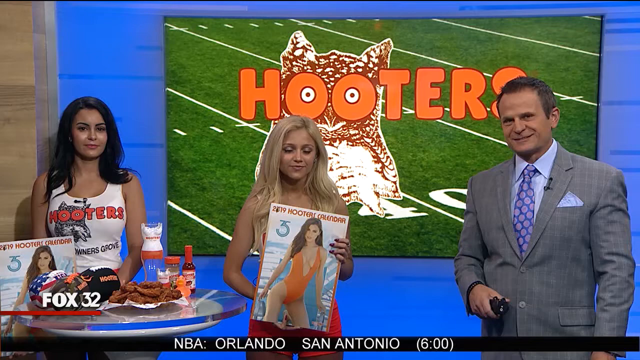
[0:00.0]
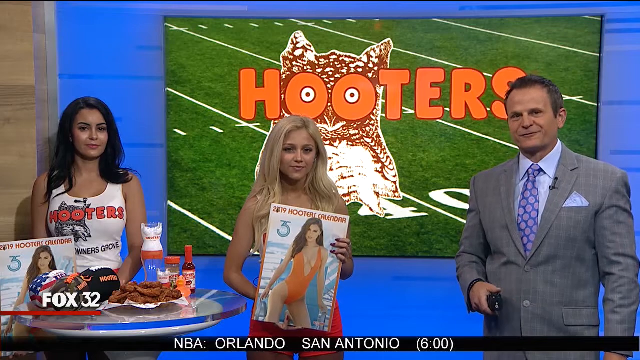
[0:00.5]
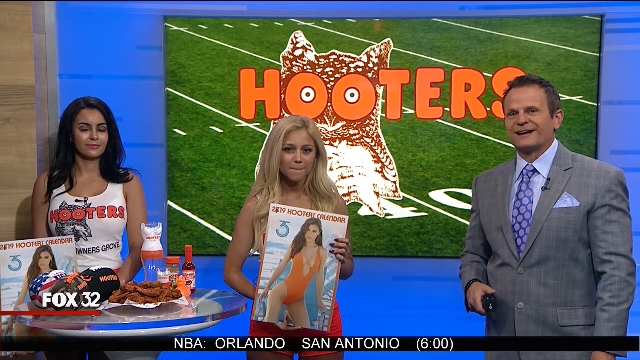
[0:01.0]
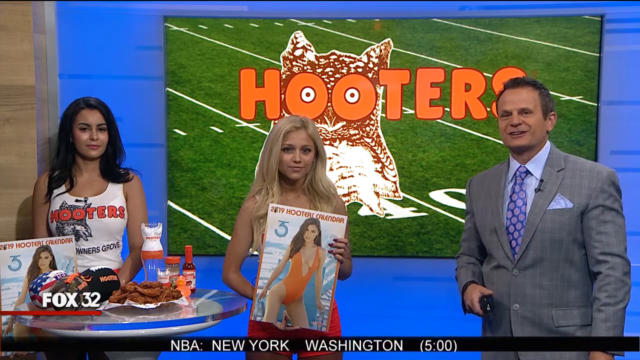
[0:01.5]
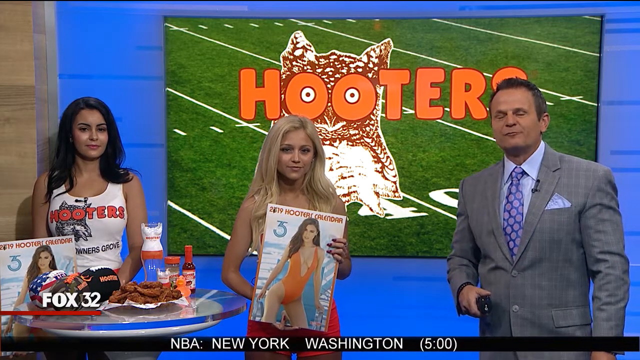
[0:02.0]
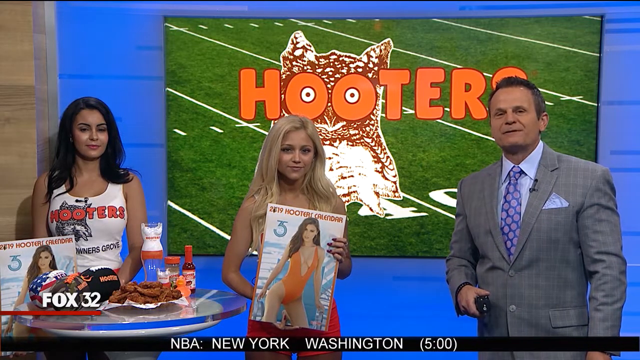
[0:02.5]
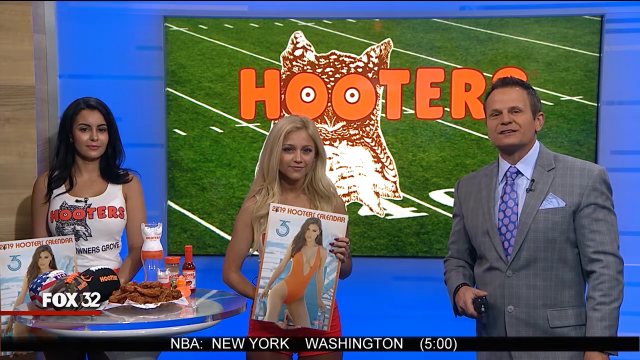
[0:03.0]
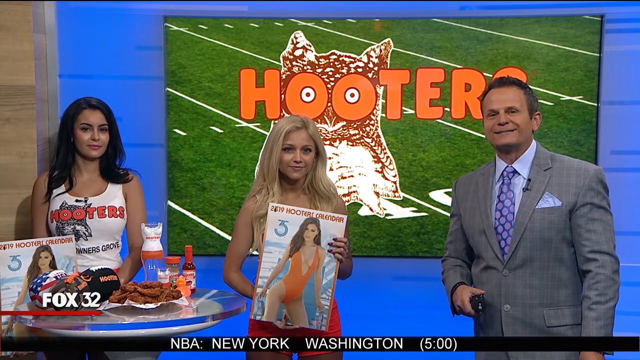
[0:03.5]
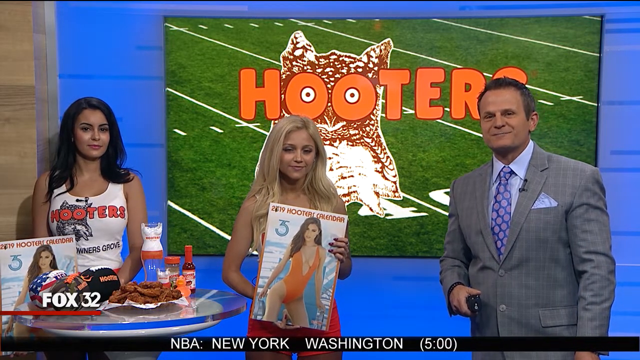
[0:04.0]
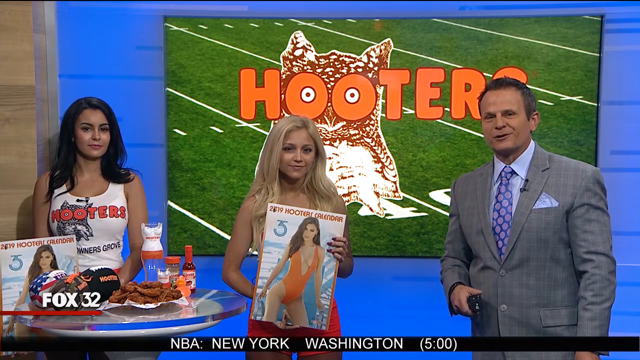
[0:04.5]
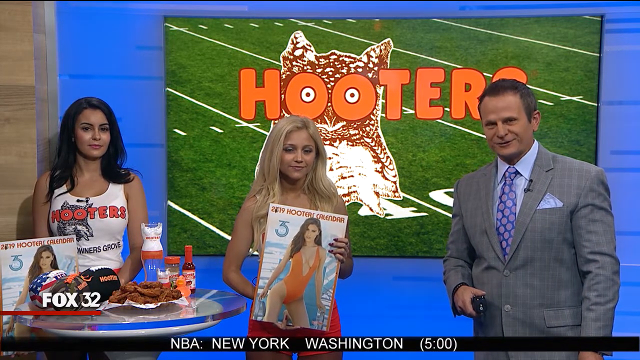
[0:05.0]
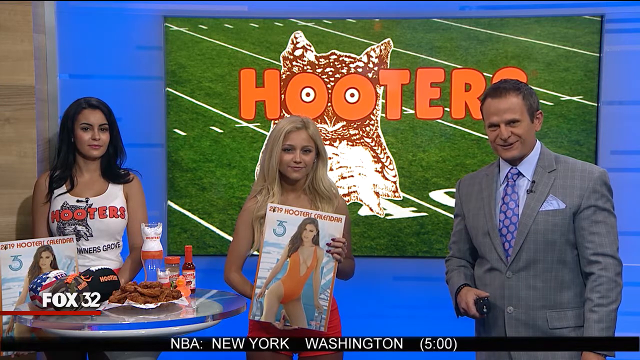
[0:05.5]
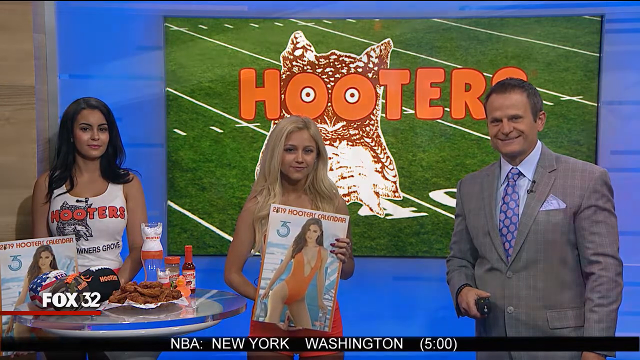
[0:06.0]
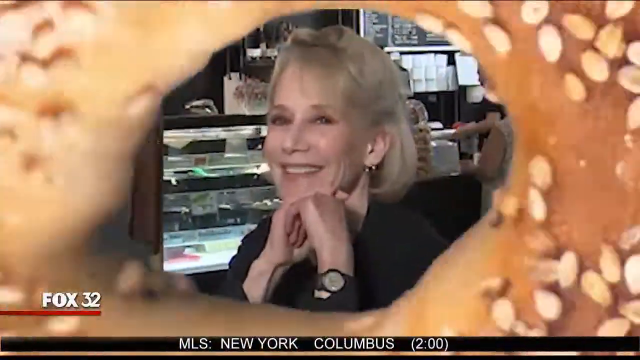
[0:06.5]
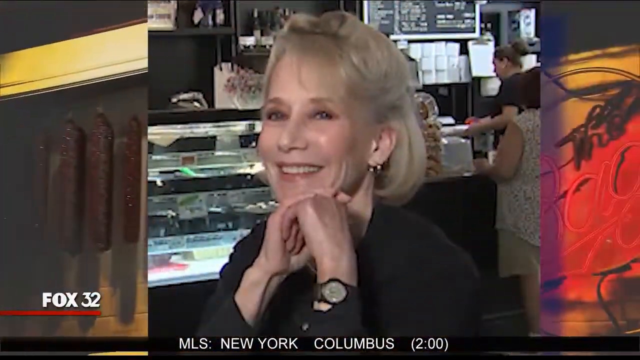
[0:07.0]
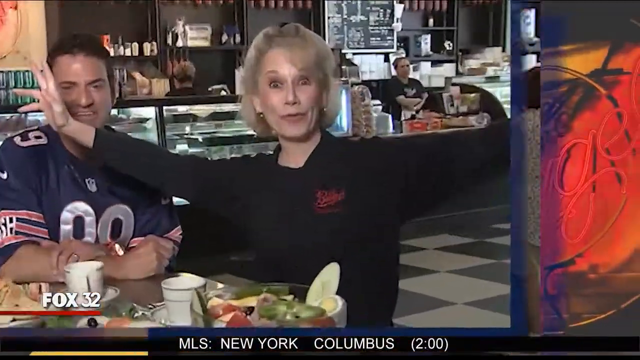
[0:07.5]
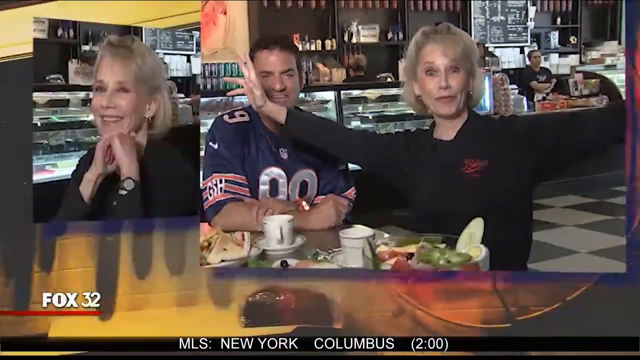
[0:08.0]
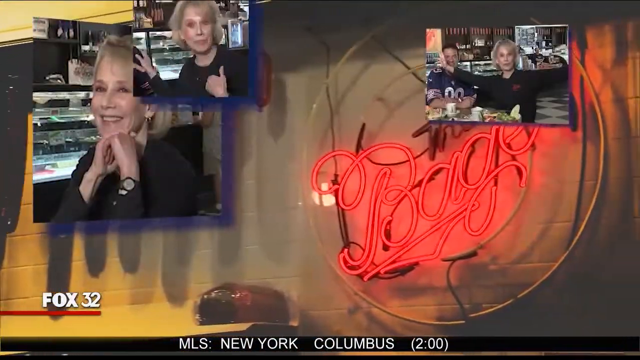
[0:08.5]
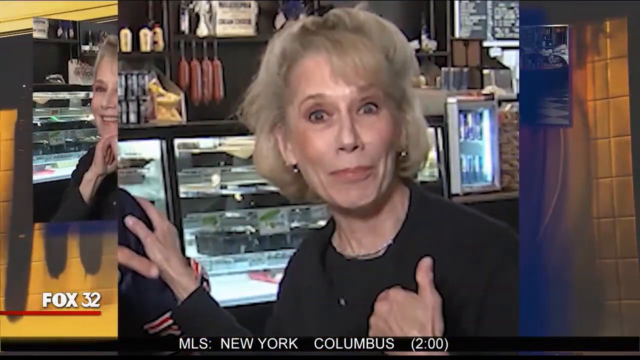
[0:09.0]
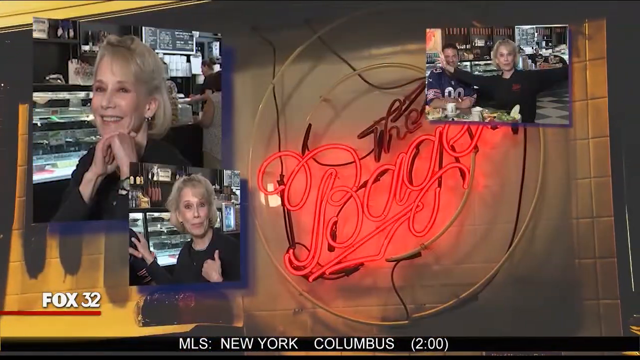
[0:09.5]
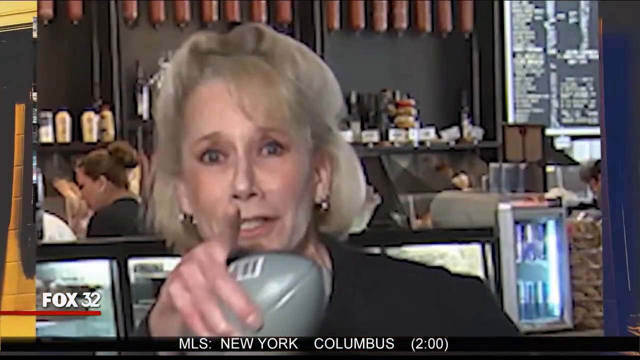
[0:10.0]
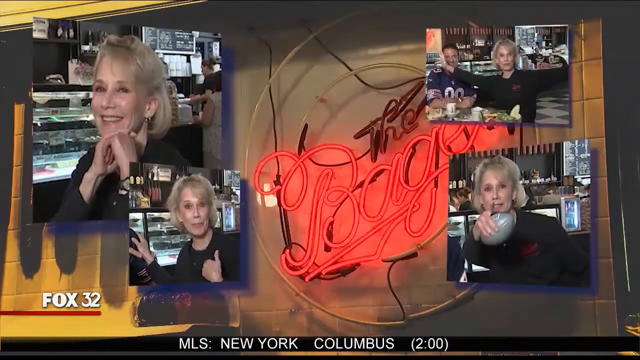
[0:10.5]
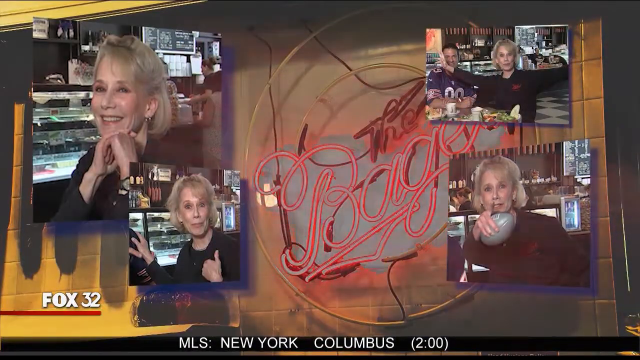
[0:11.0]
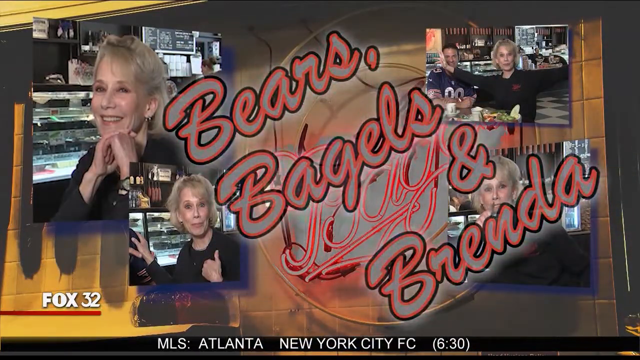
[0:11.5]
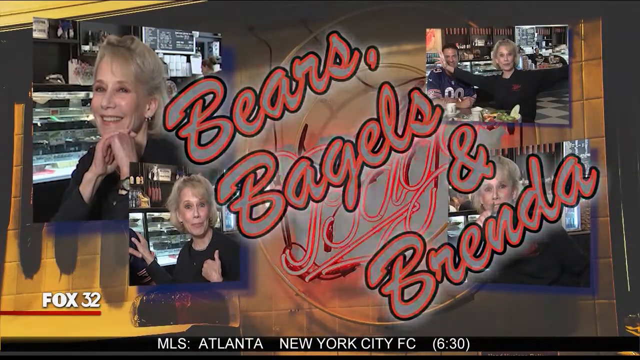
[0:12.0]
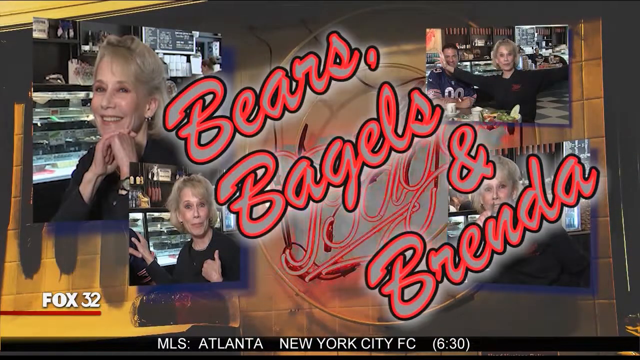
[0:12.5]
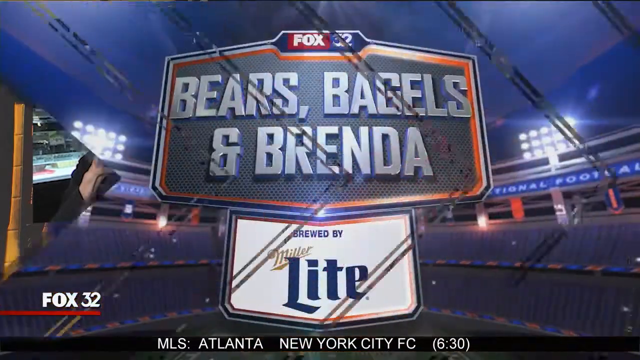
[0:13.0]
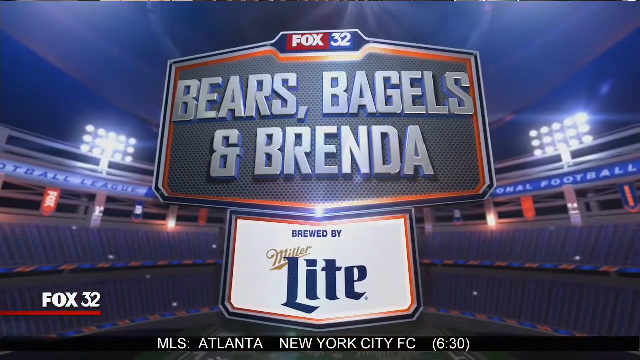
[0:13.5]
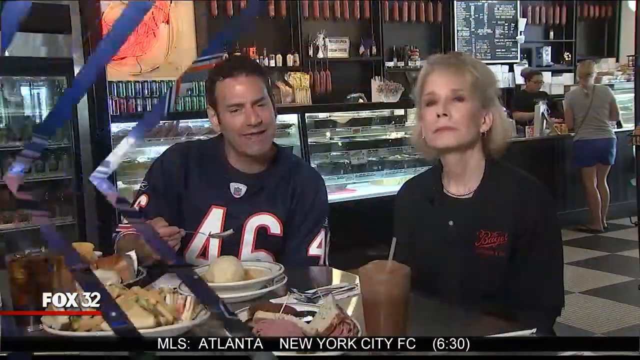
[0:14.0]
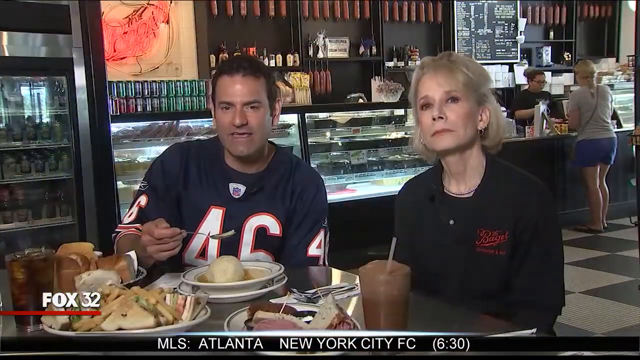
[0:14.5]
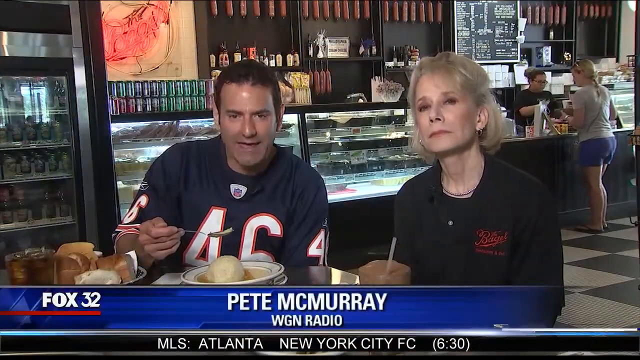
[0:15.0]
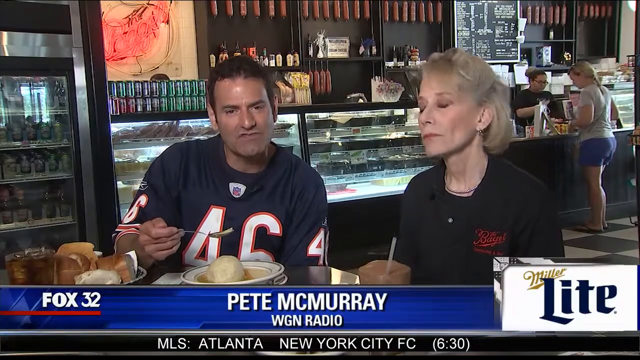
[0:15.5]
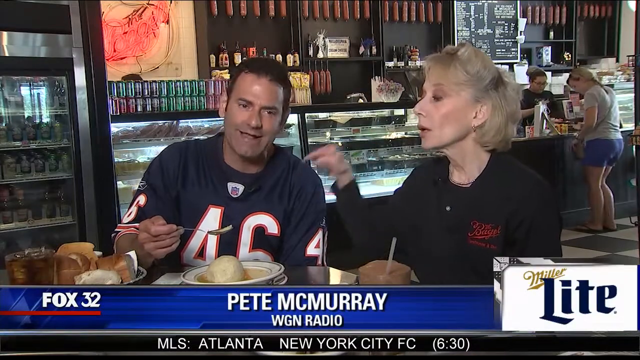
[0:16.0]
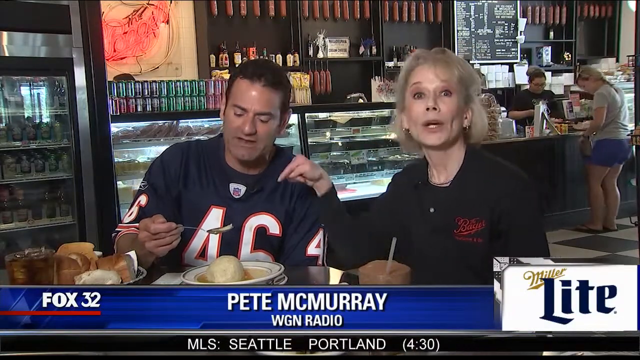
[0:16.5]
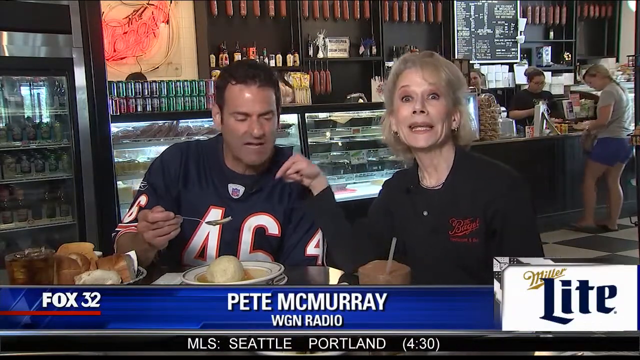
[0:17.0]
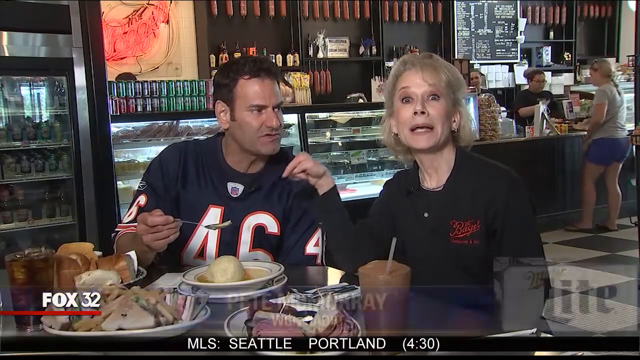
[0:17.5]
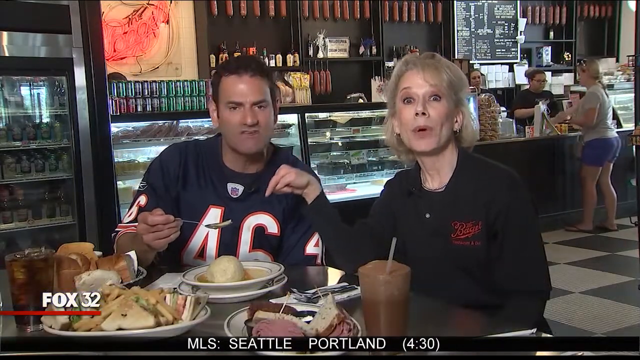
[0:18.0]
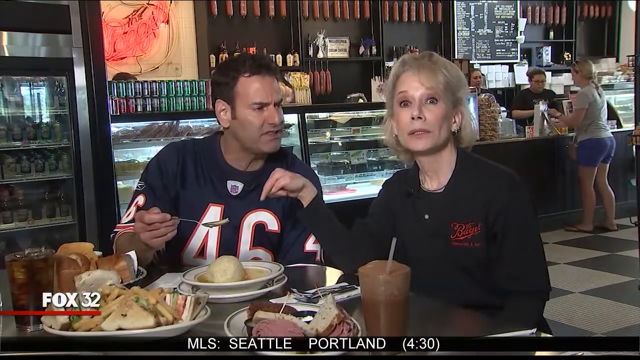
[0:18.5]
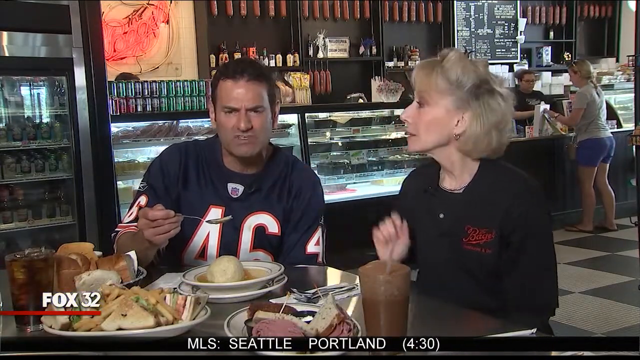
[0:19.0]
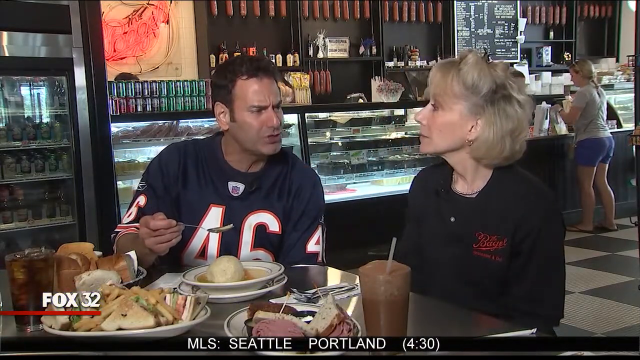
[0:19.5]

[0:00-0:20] The video opens on what looks like three people in a newsroom. A man on the left wears a gray suit, and two women on the right, one blonde and one with darker hair, both wear white tops with the Hooters logo on the front. Behind them is a big blue wall with a screen on it, which shows what looks like an American football pitch with the Hooters logo on top of it. The man is talking. The shot changes to different photographs, shown full-size on the screen, of an elderly woman with short white hair. She looks like she is in a restaurant, and the photographs are kind of of her talking to somebody. Text then appears on screen reading "Bears, Bagels, and Brenda" in the style of a neon sign, kind of flashing like one. The scene changes altogether to footage of the woman from the photographs, sitting in a restaurant with a man on her left who wears a football jersey. A caption at the bottom of the screen reads "Pete McCleary, WGN Radio." Both of them point at the food, talking about it and speaking to the camera.